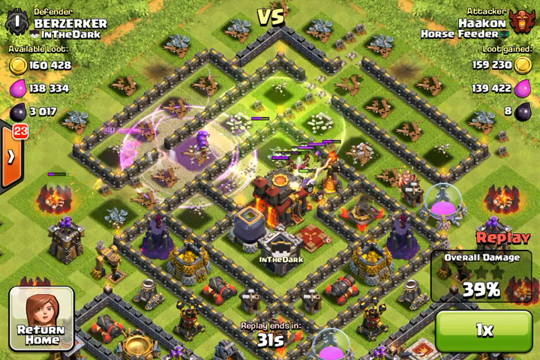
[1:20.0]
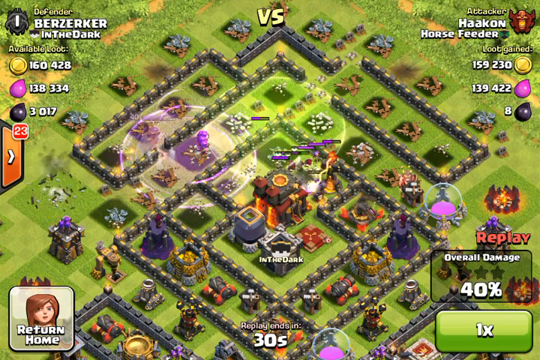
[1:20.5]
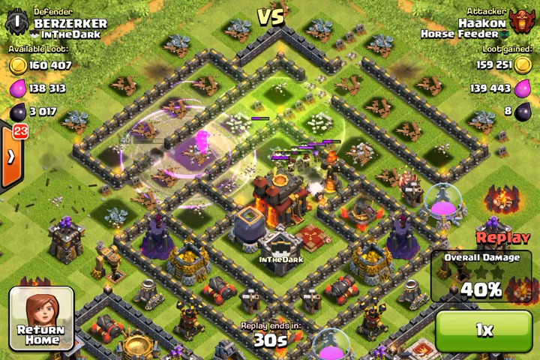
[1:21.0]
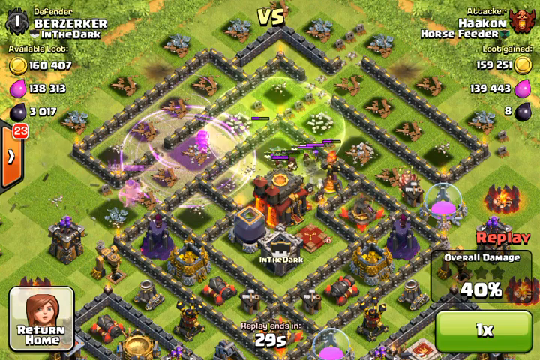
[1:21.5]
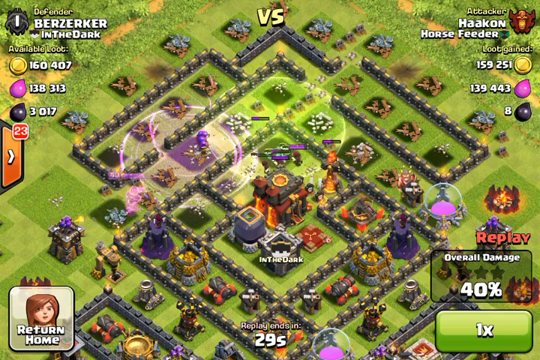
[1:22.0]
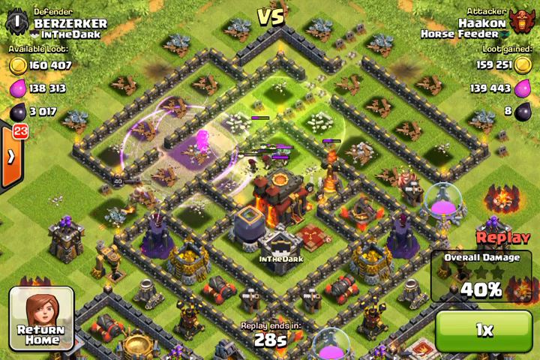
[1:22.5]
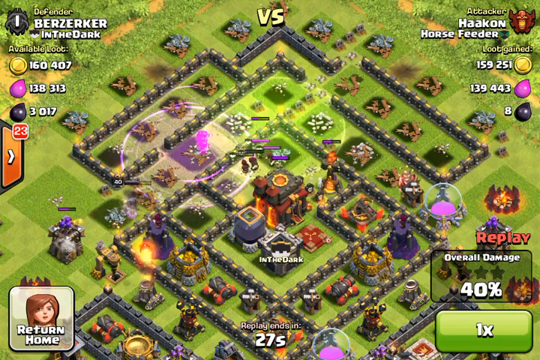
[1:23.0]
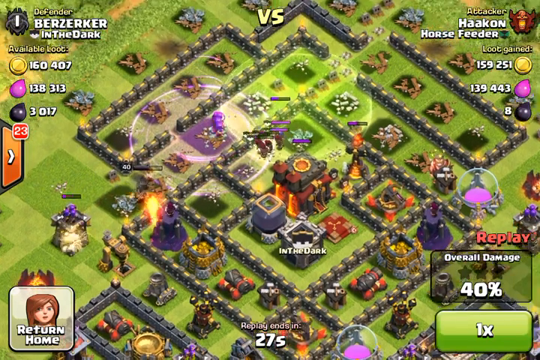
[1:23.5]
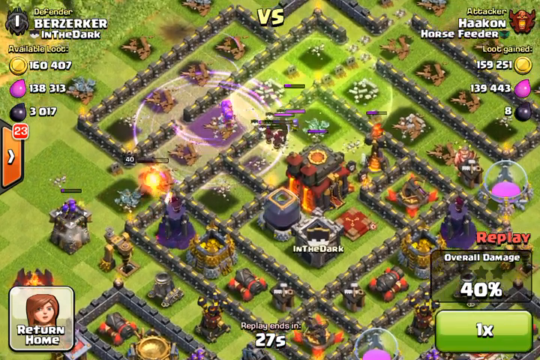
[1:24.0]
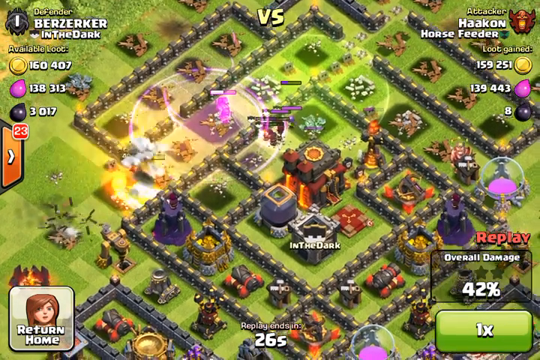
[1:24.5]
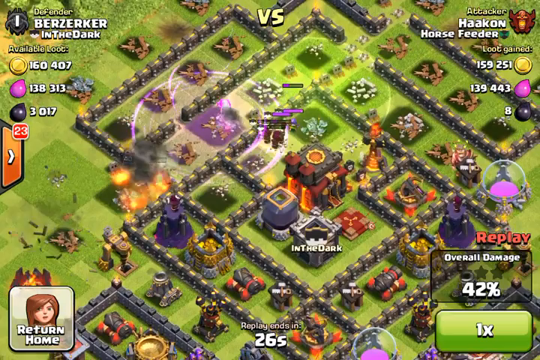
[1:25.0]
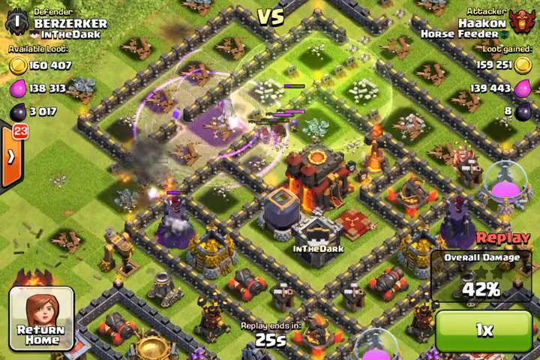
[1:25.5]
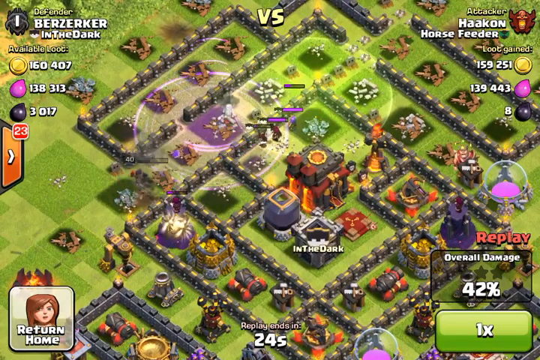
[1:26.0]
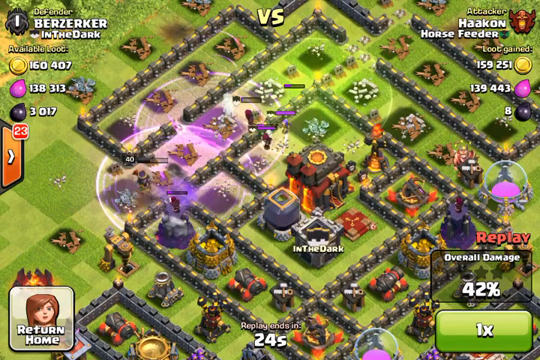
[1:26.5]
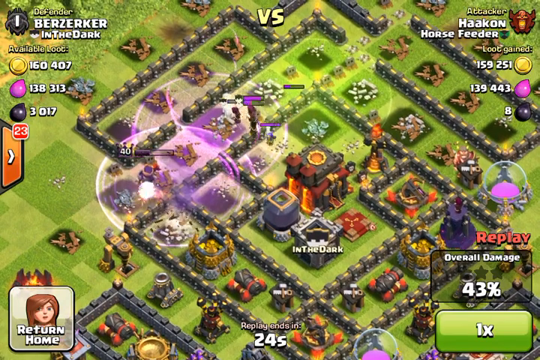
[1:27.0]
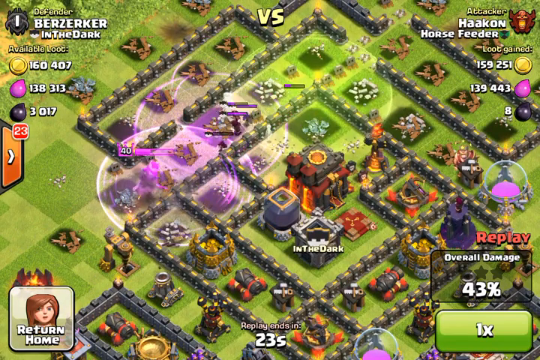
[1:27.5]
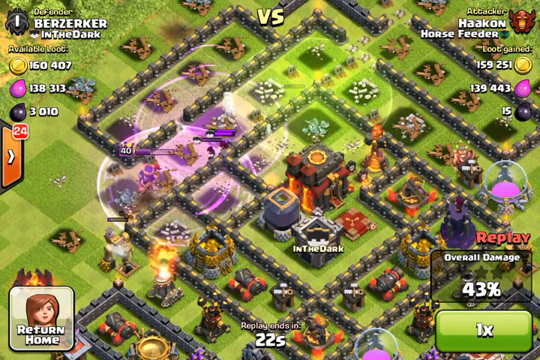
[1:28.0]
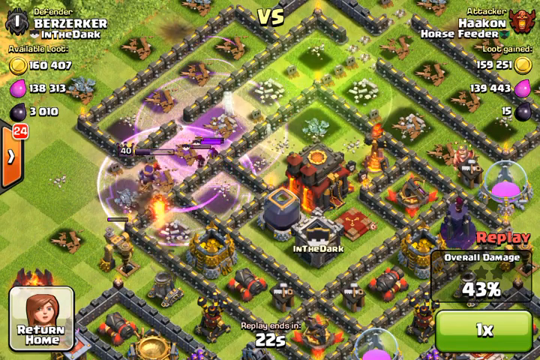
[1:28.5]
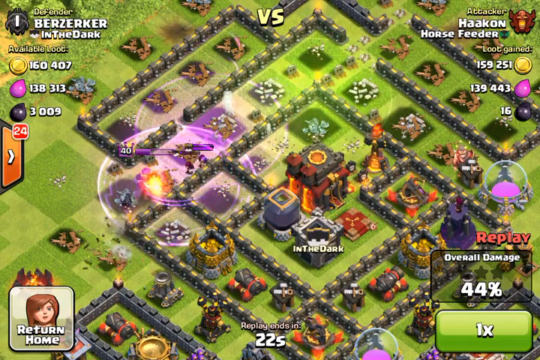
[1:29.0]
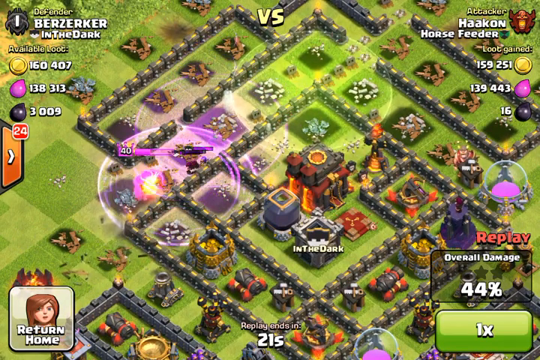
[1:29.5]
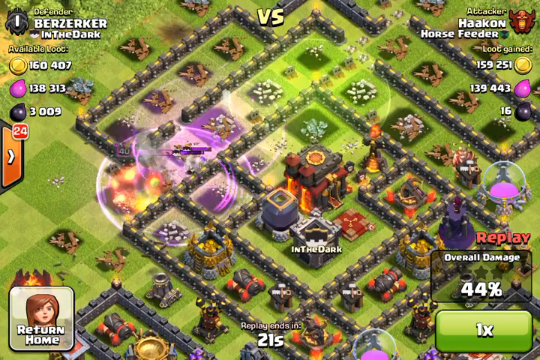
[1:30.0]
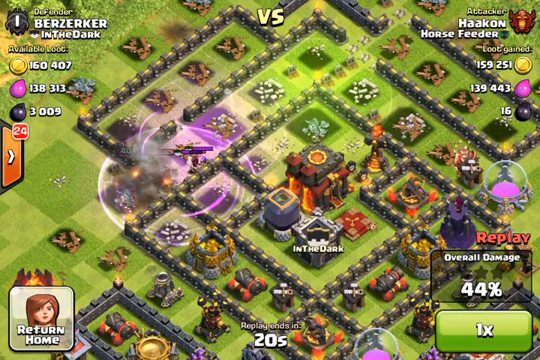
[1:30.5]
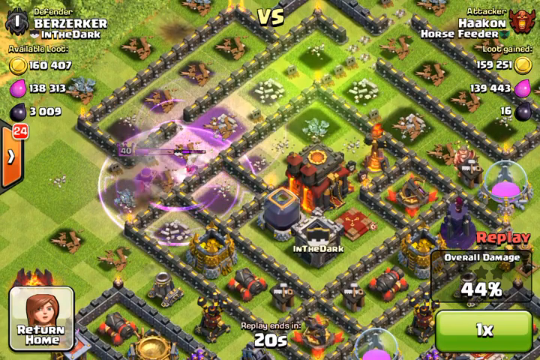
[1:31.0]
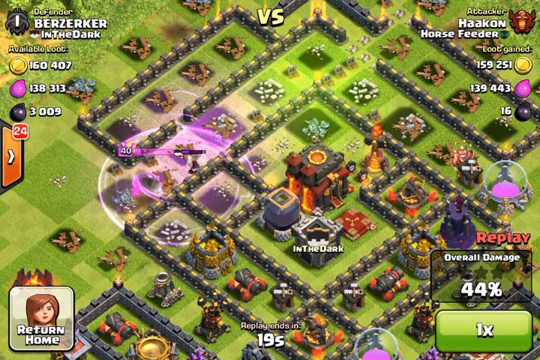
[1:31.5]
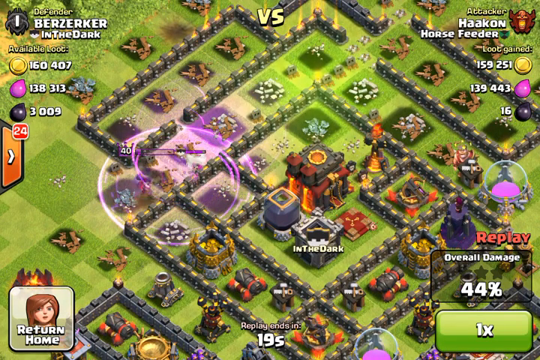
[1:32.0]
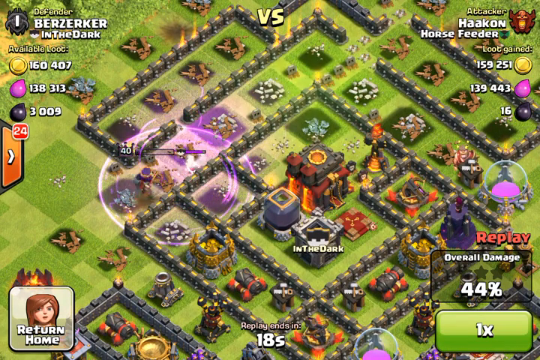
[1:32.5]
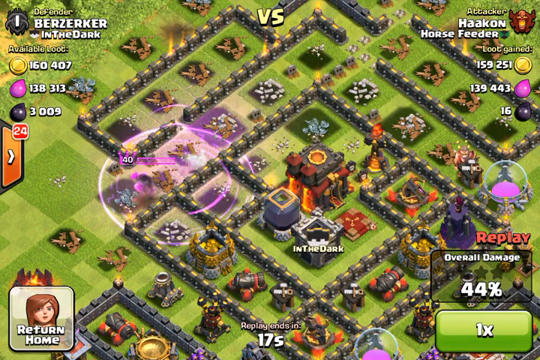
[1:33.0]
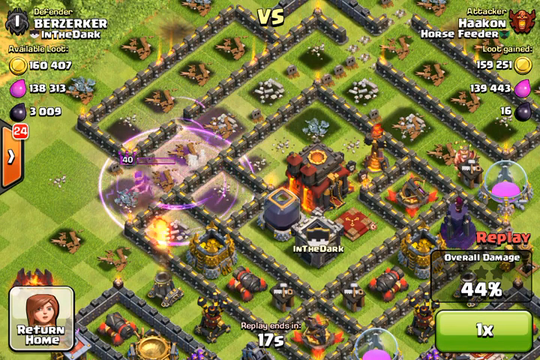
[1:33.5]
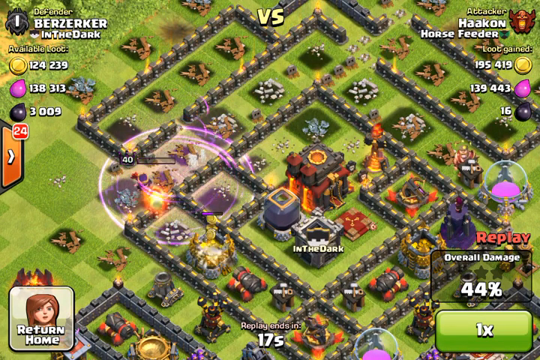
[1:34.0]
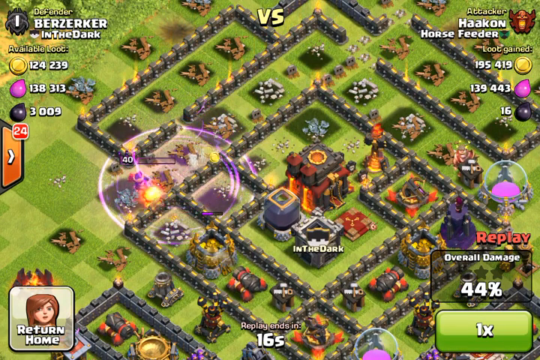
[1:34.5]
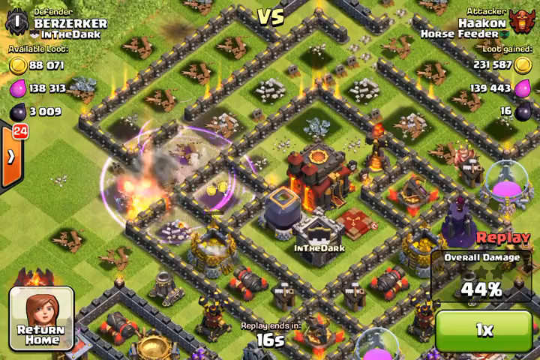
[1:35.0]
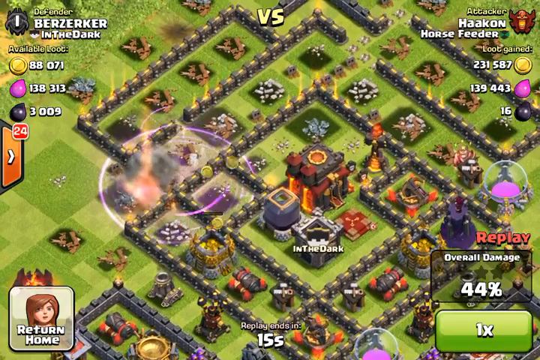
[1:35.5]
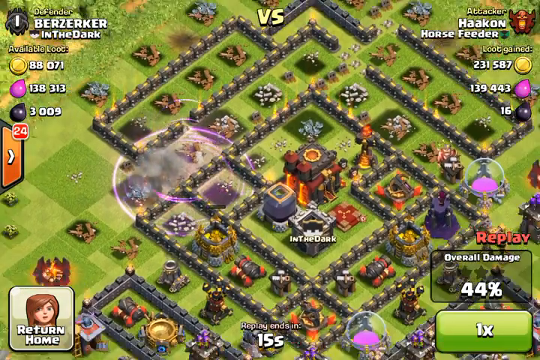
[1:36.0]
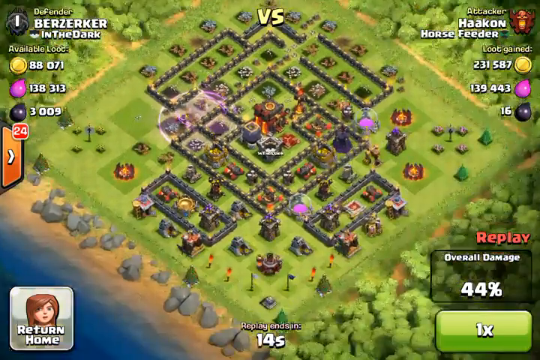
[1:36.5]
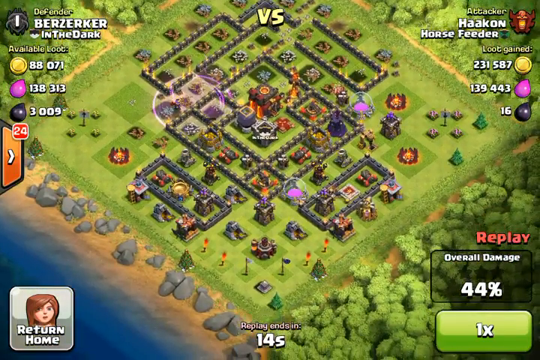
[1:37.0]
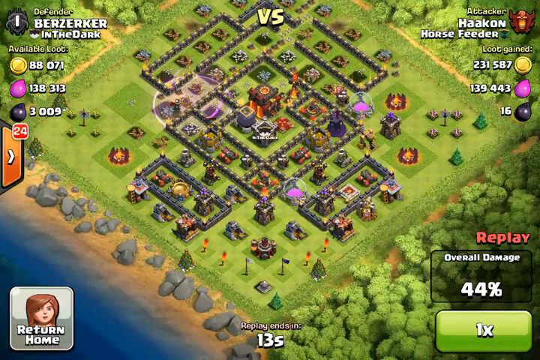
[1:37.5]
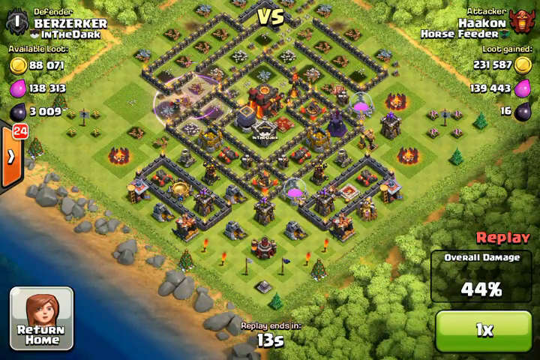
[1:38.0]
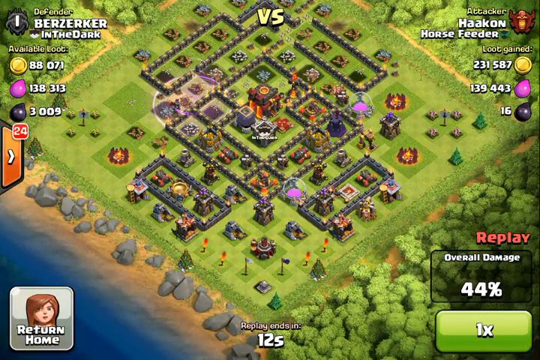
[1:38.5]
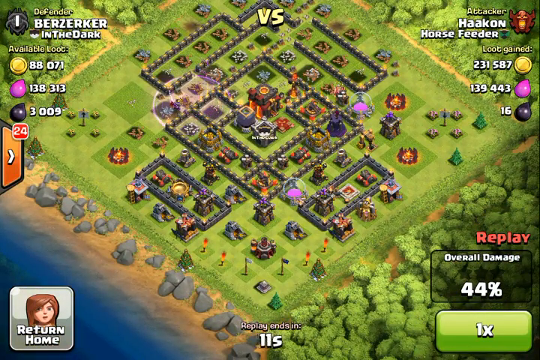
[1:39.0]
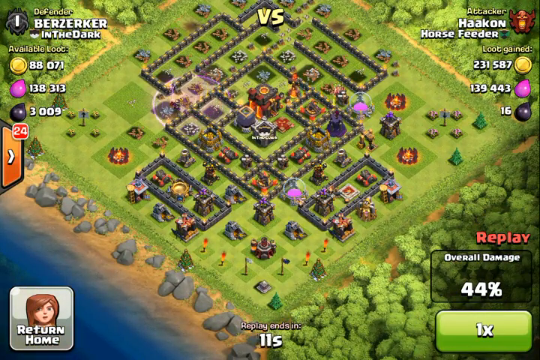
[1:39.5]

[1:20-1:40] The overhead view of the Clash of Clans map continues, with the battle seemingly nearing completion. The concentration of fire now seems to be on the left side, where some larger vehicles are placed outside the city's perimeter. Some characters make their way there from the middle; it is hard to tell which characters belong to the city and which to the attacker. Damage is still at 44%. One of the icons, which looks like an oil icon, is one of the last to fill up.